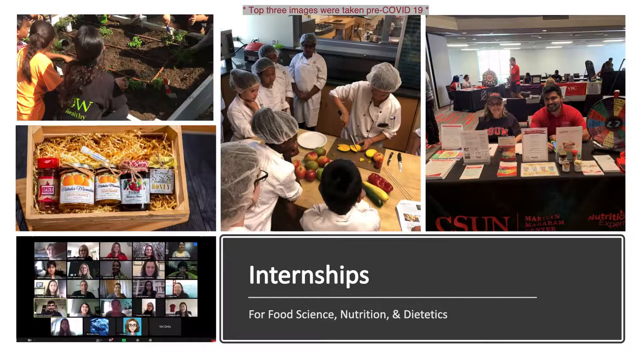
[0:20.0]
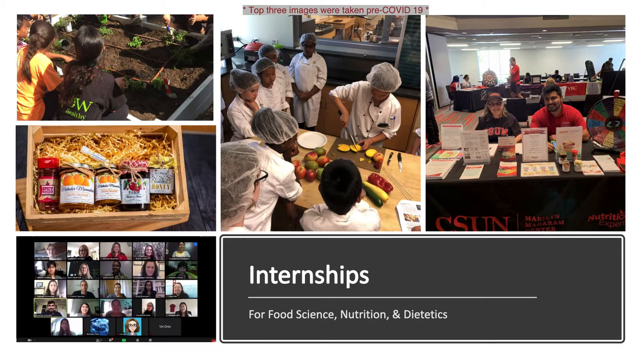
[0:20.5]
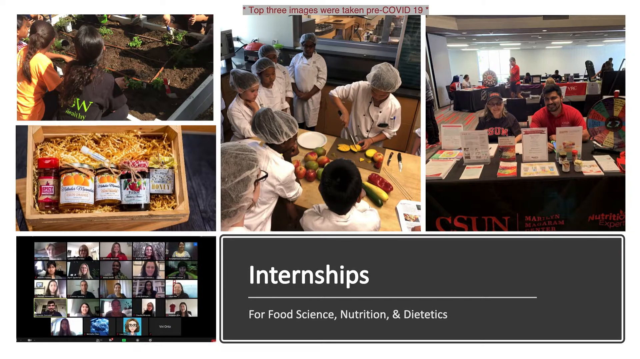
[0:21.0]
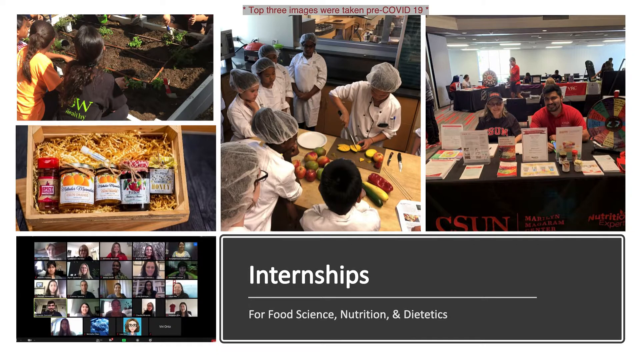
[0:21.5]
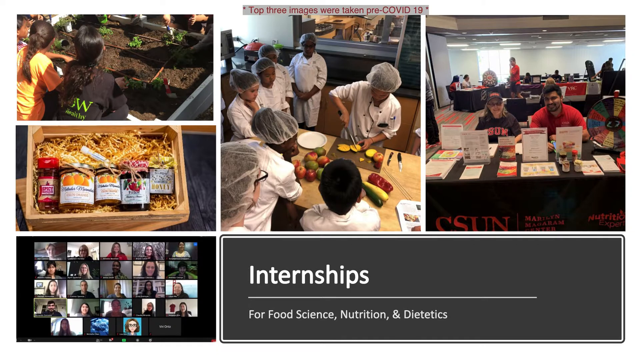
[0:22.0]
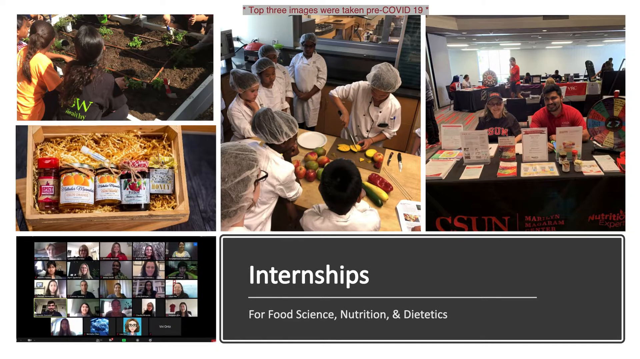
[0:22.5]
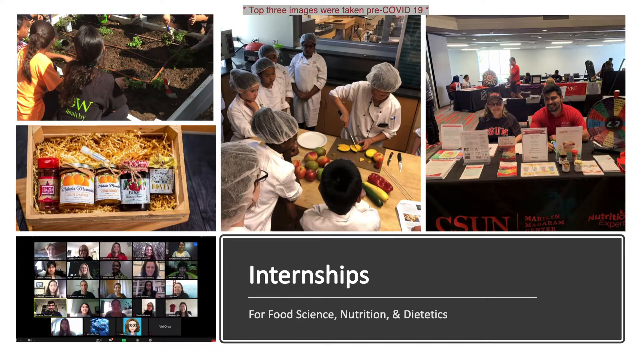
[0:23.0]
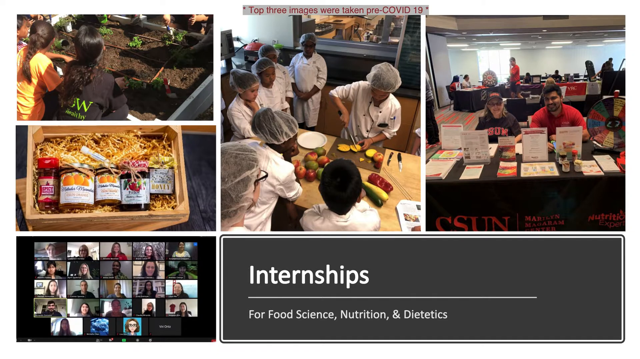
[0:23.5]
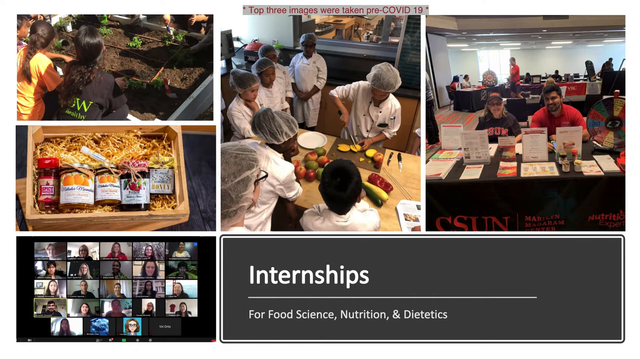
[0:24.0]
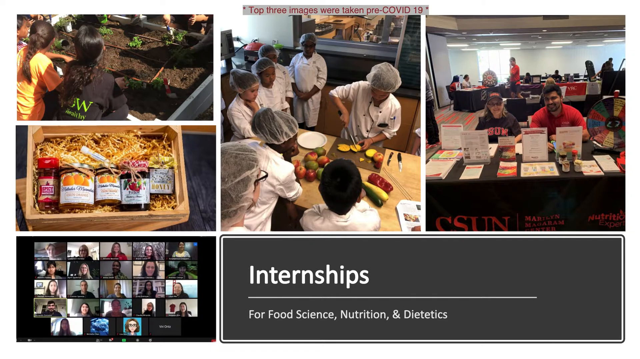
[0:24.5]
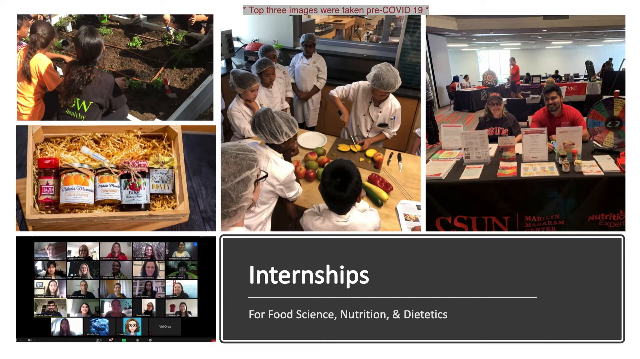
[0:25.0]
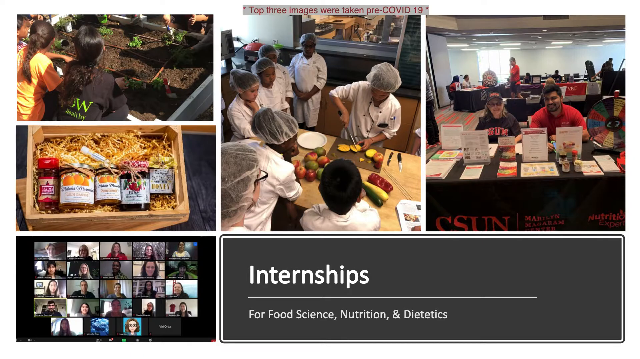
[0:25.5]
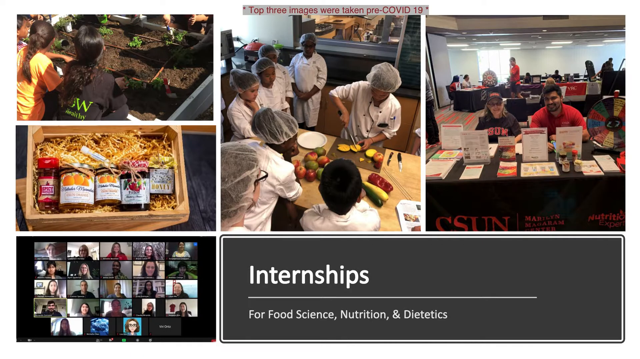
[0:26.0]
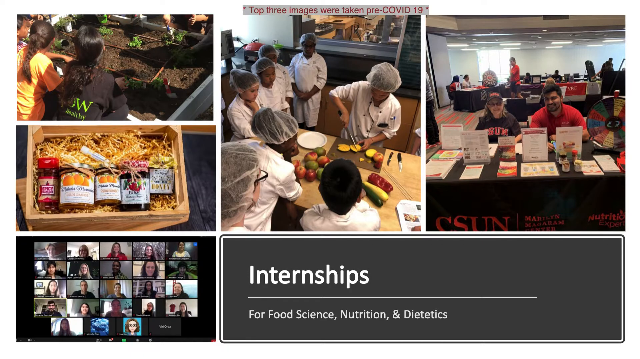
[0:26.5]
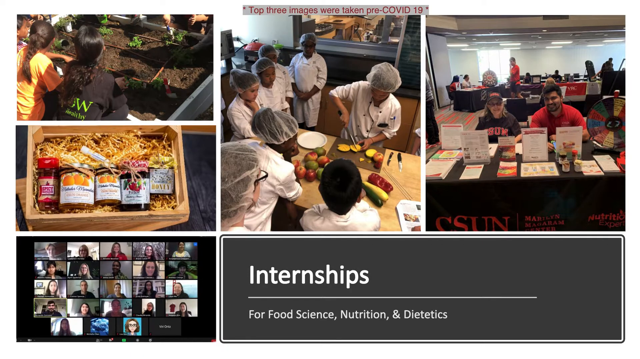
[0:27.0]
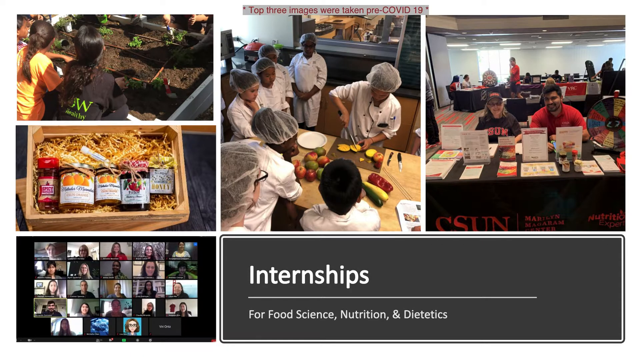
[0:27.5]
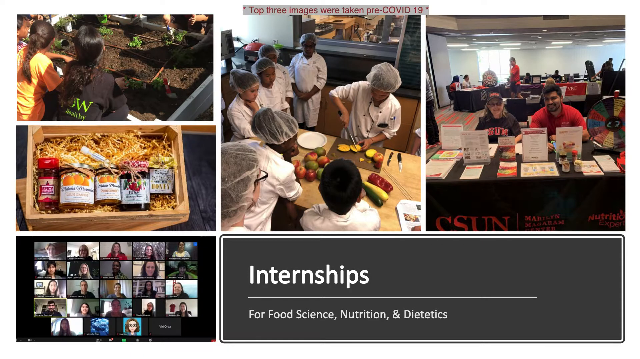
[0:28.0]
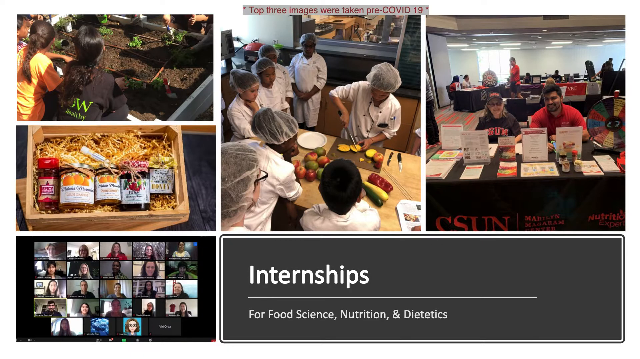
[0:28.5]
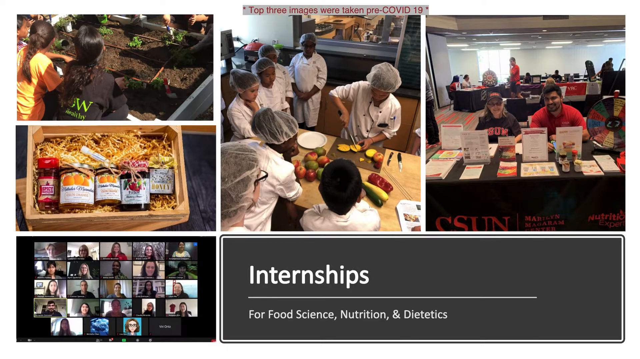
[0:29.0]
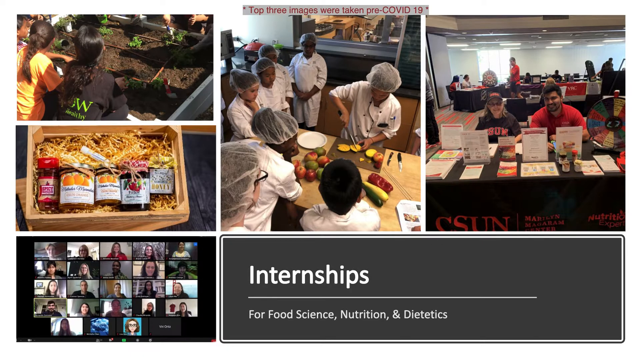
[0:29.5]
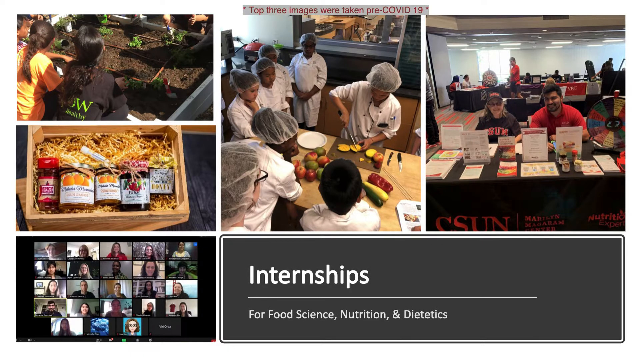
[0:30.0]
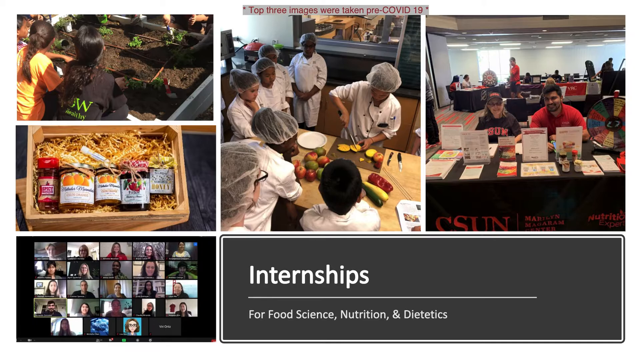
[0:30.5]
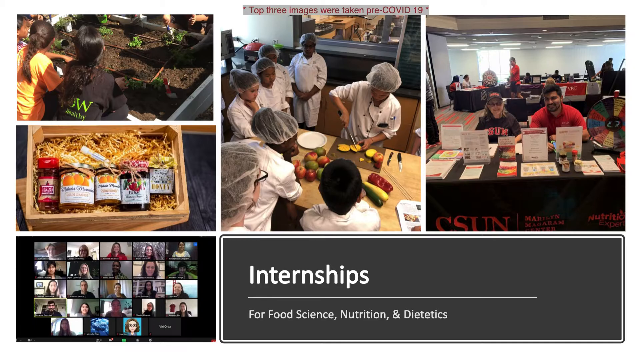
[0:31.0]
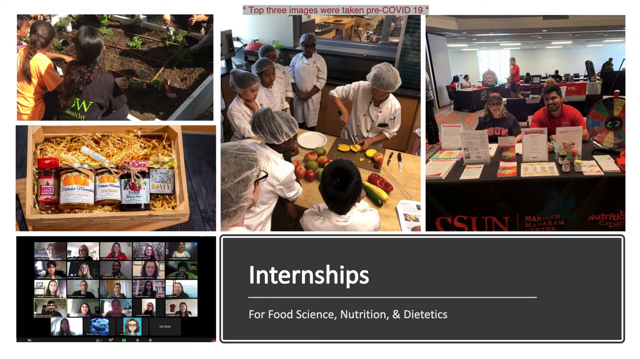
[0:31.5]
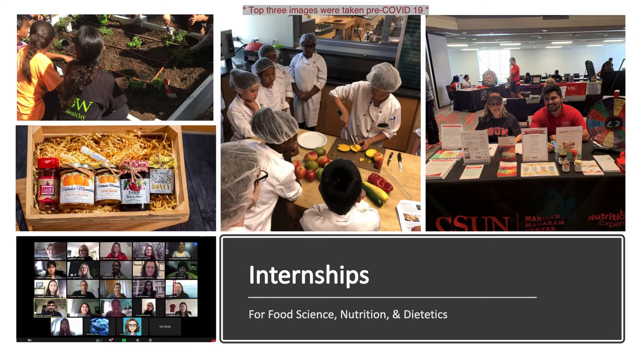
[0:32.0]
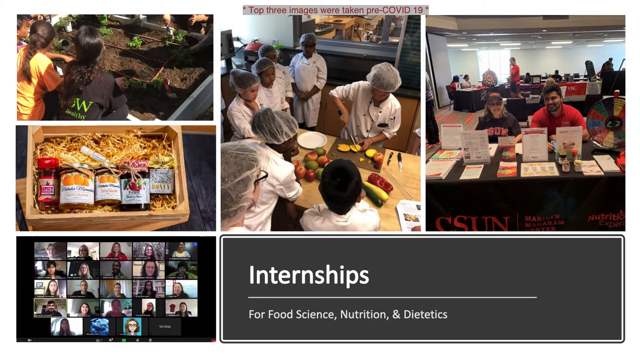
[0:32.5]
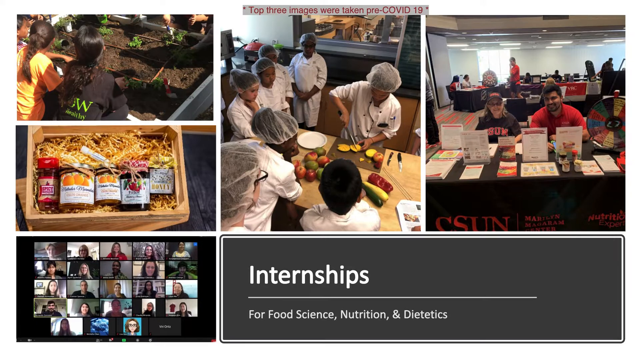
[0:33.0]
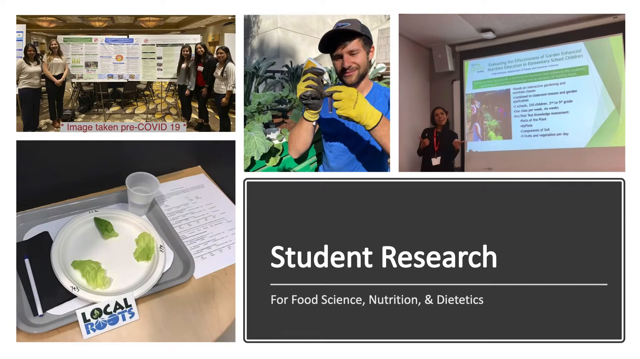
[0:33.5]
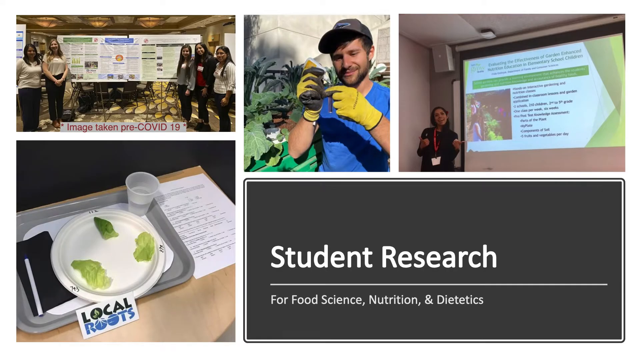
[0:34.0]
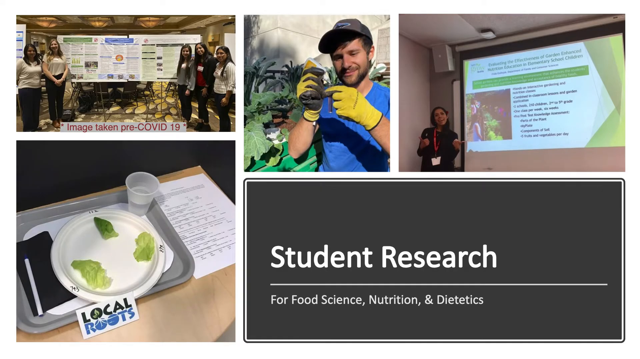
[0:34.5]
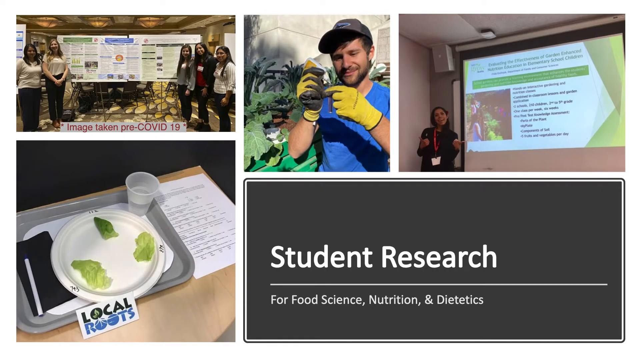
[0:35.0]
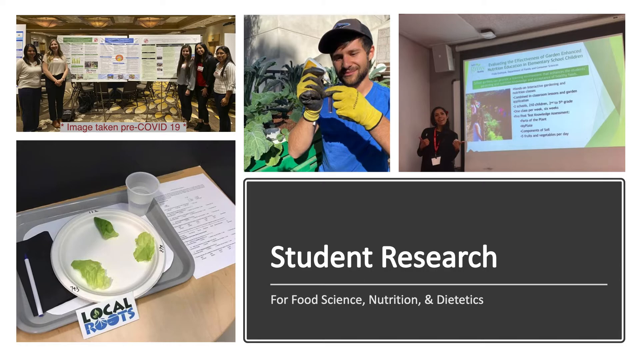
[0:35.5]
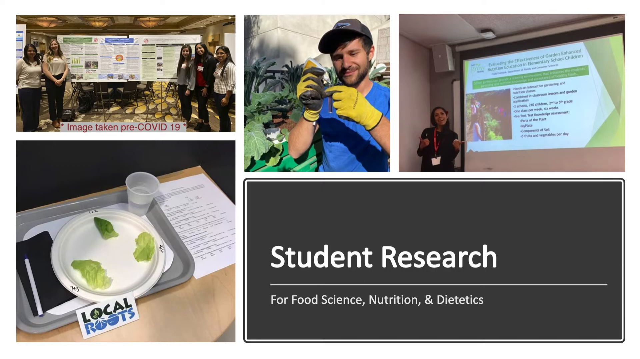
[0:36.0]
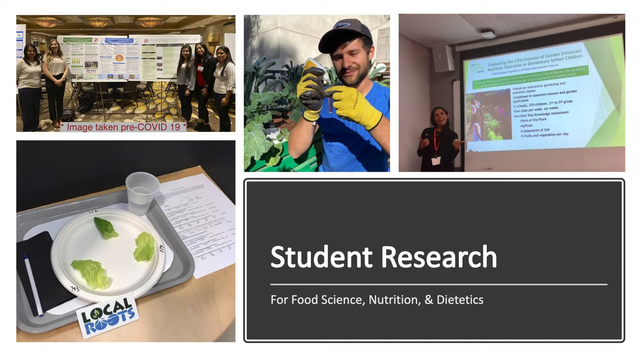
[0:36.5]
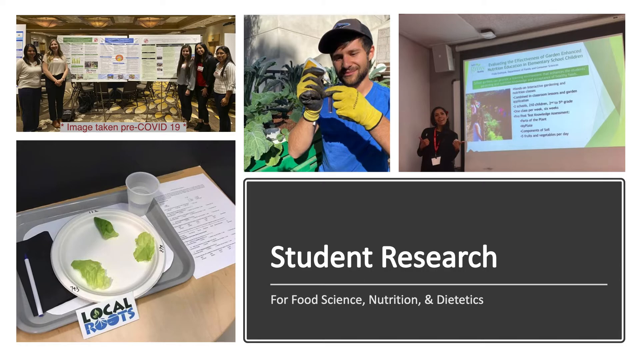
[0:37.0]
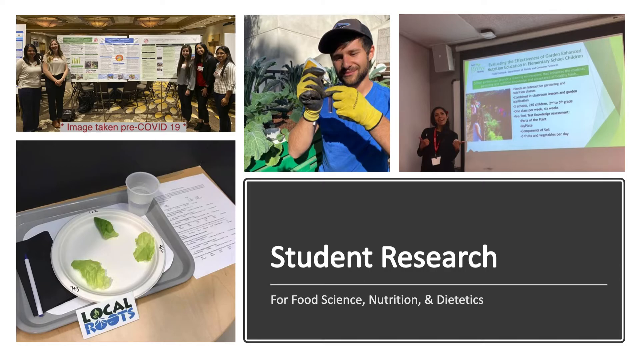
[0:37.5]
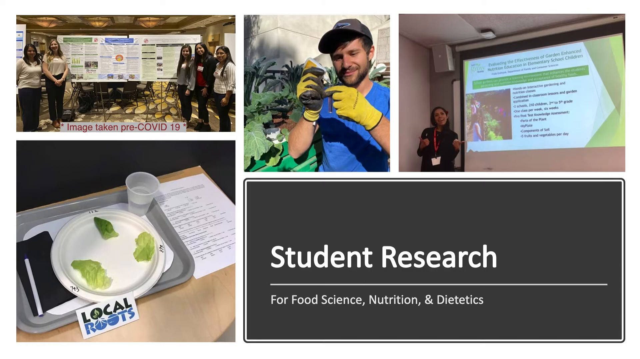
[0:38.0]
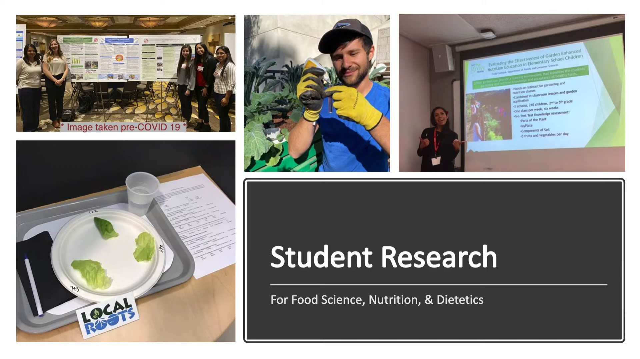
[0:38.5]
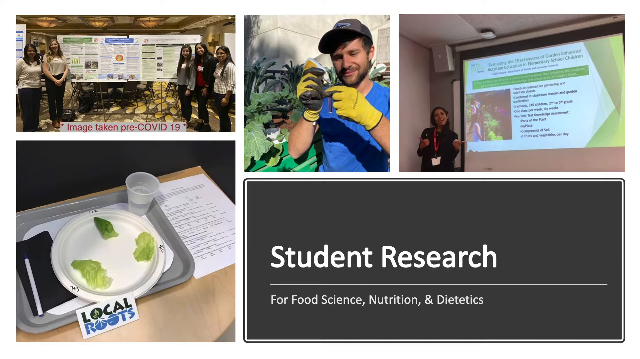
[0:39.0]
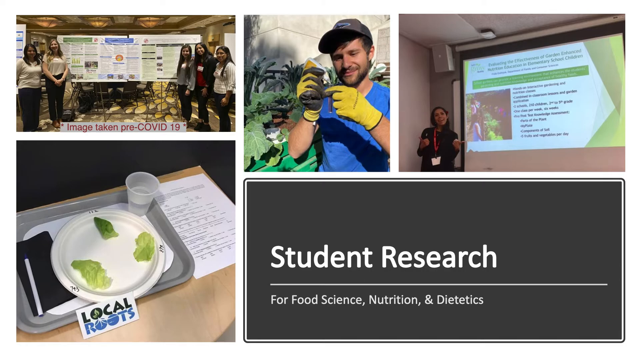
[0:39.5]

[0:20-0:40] A screen reads "Internships for food, science, nutrition, and dietetics" and carries several still images: what looks like people at some sort of conference sitting at tables handing out information, chefs cooking in a classroom, people gardening, and a box filled with various jellies and jams. The video then moves to another screen titled "Student research for food, nutrition, and dietetics," with "student research" in the bottom right corner. At the top left, what looks like some women stand in front of boards of information at a conference, with "image taken pre-COVID-19" written at the bottom. Other images show a man in a blue shirt and a ball cap wearing gardening gloves working with plants, a woman in front of a PowerPoint projected onto a screen, and, in the bottom left corner, a plate with three lettuce leaves on it.